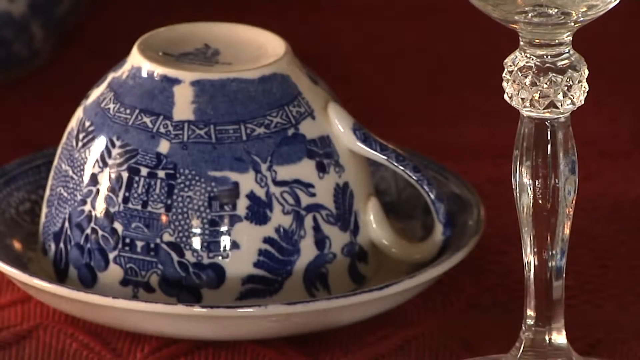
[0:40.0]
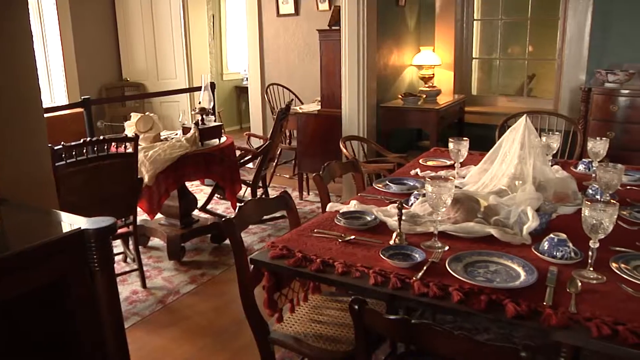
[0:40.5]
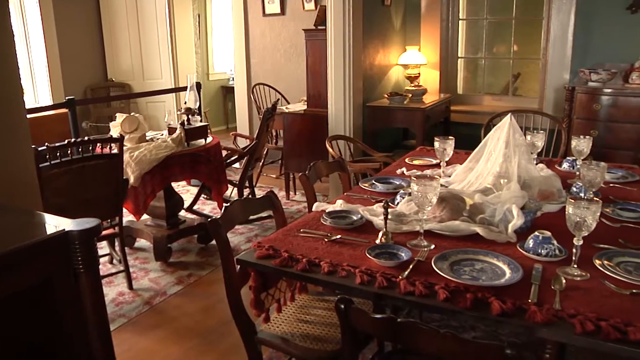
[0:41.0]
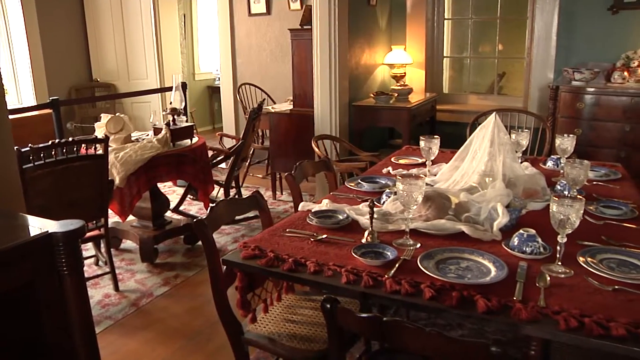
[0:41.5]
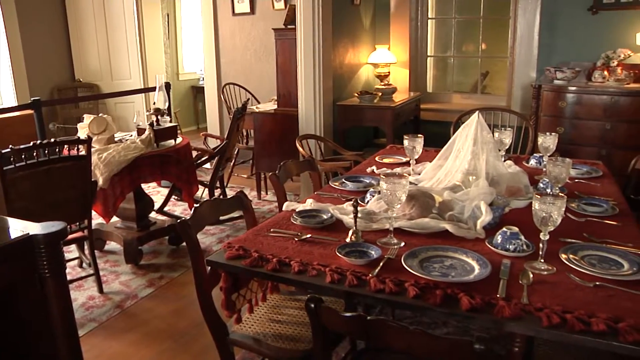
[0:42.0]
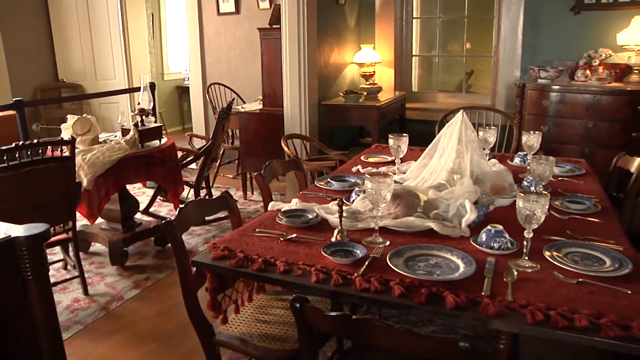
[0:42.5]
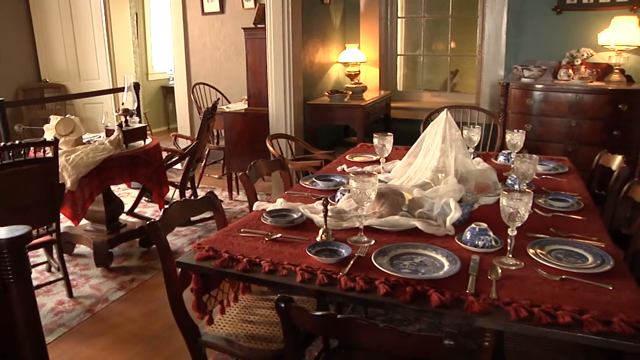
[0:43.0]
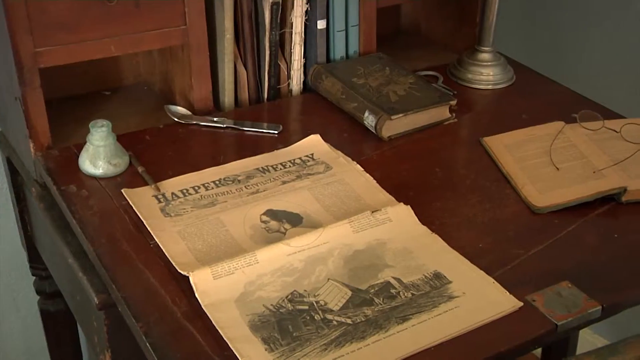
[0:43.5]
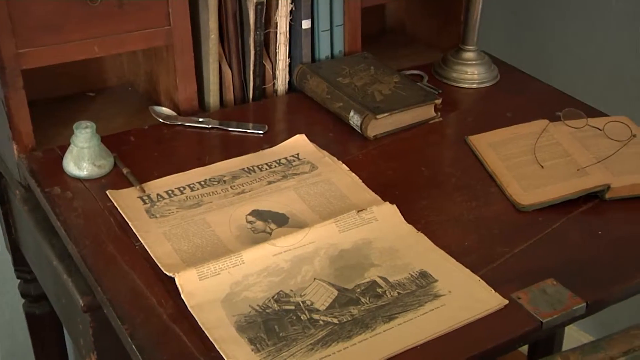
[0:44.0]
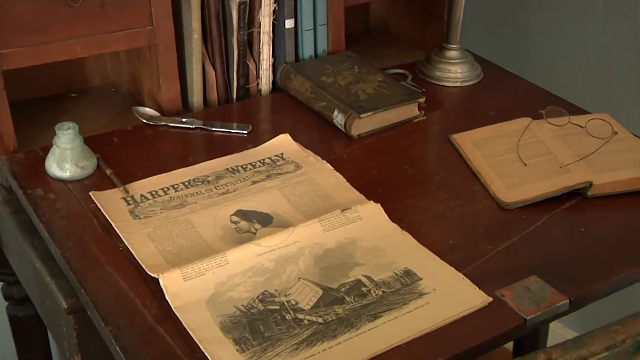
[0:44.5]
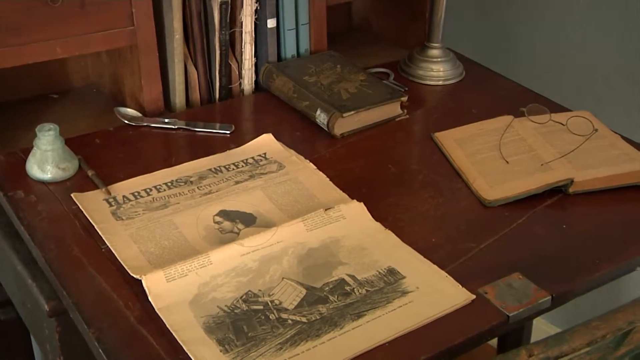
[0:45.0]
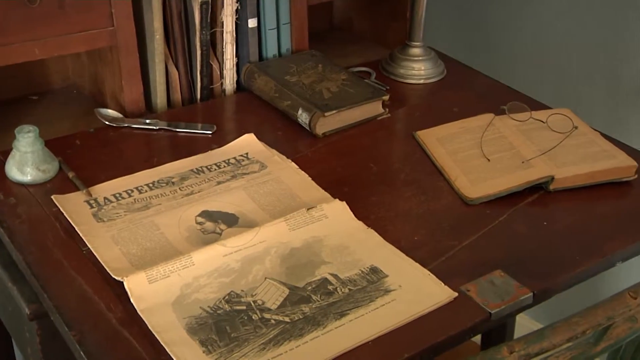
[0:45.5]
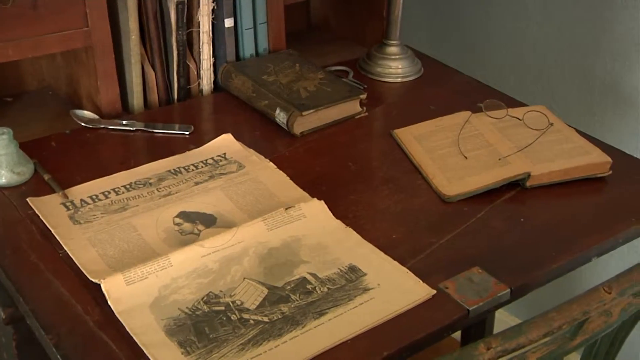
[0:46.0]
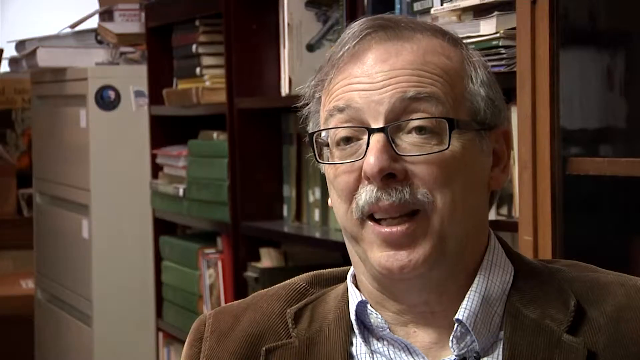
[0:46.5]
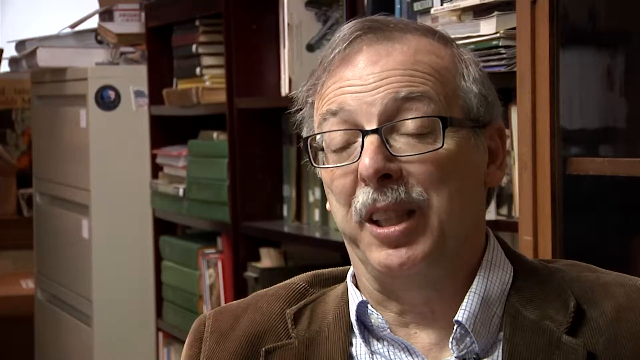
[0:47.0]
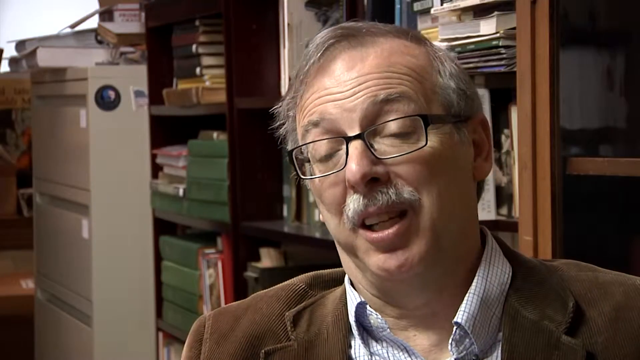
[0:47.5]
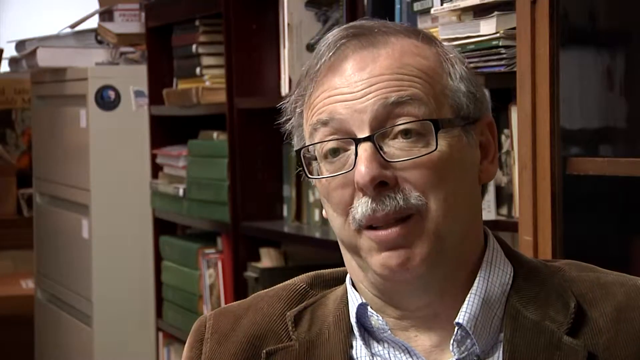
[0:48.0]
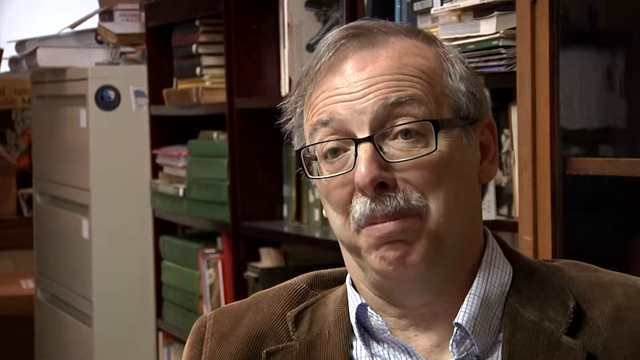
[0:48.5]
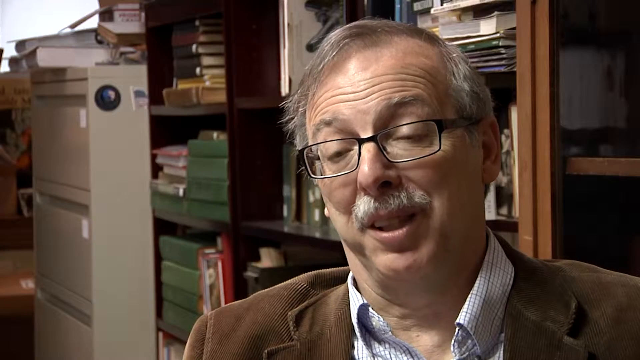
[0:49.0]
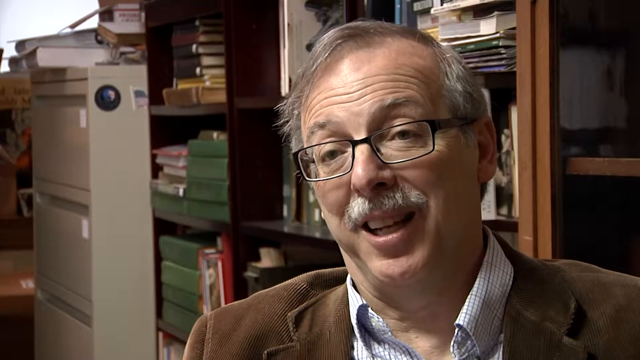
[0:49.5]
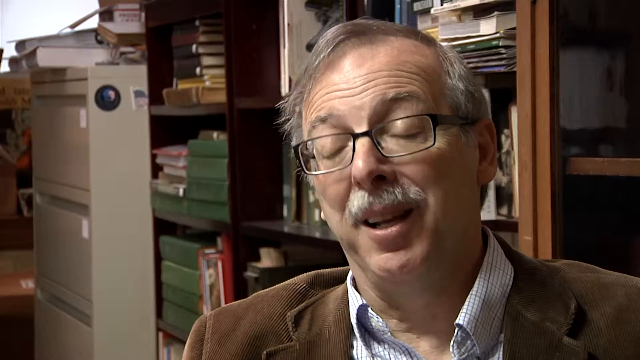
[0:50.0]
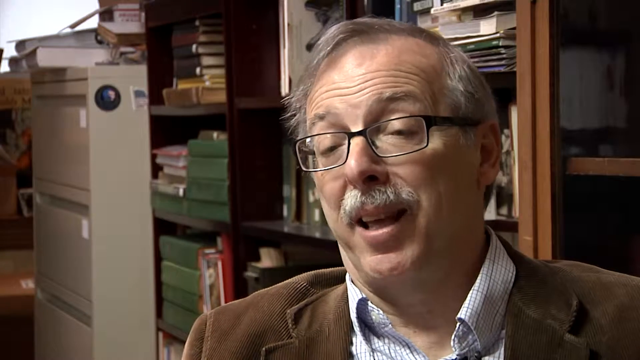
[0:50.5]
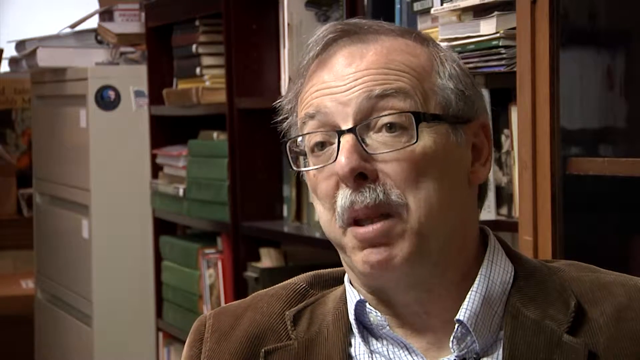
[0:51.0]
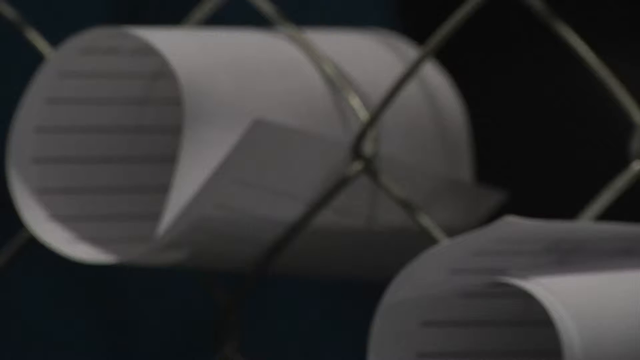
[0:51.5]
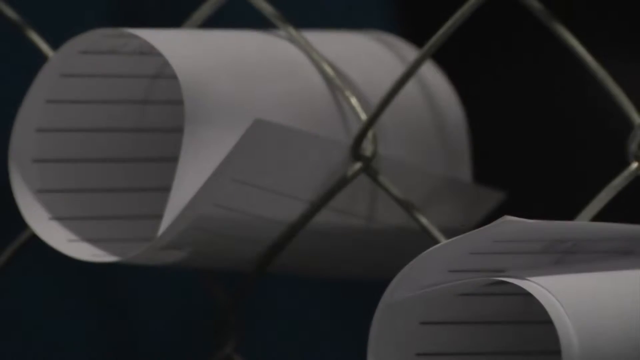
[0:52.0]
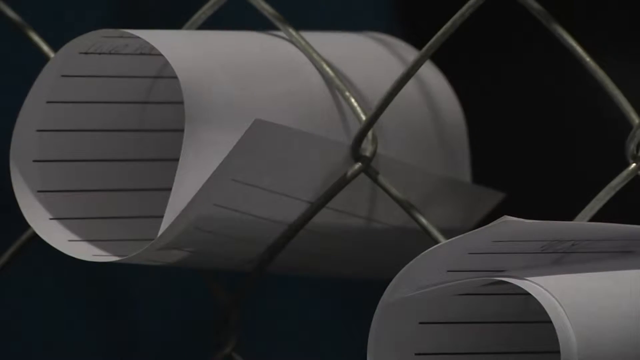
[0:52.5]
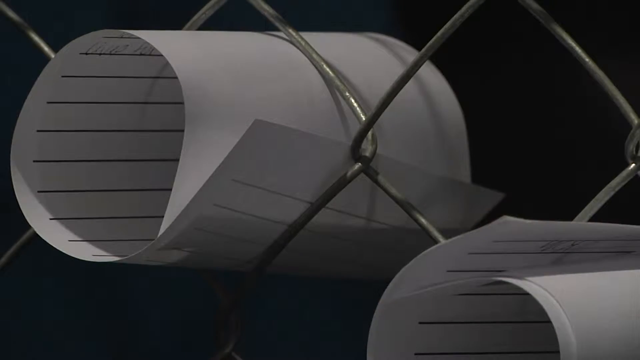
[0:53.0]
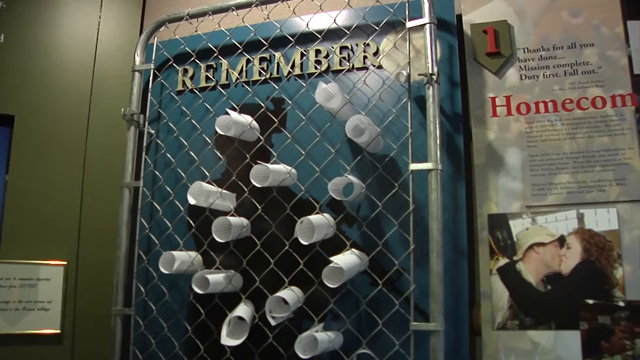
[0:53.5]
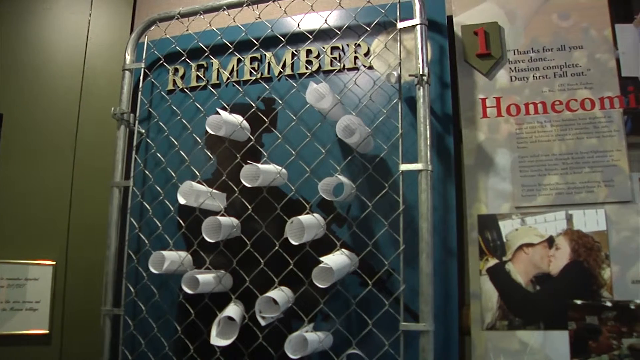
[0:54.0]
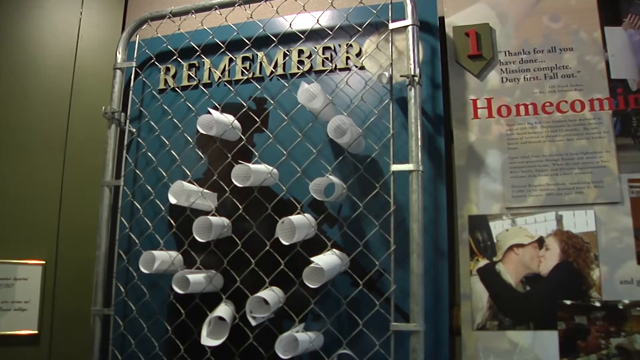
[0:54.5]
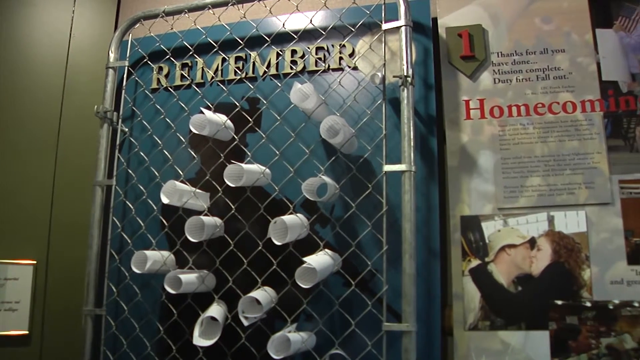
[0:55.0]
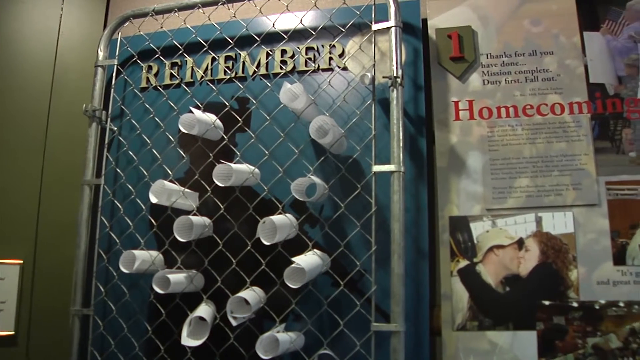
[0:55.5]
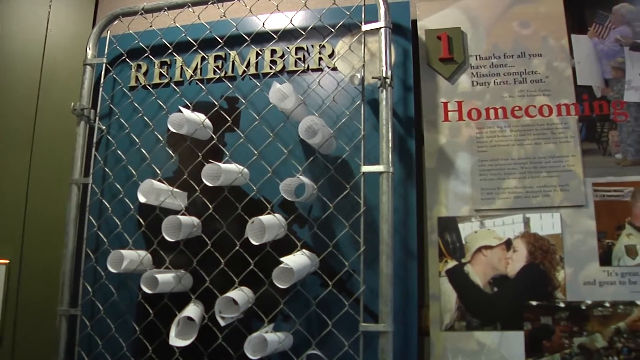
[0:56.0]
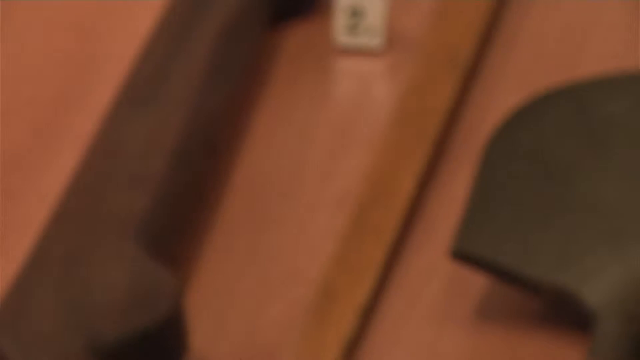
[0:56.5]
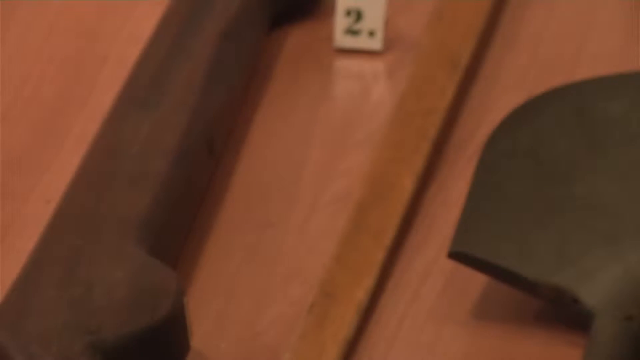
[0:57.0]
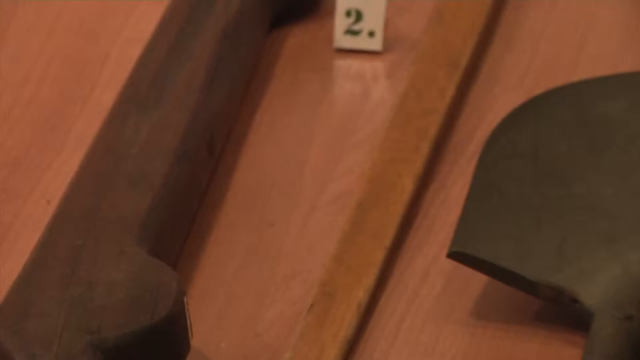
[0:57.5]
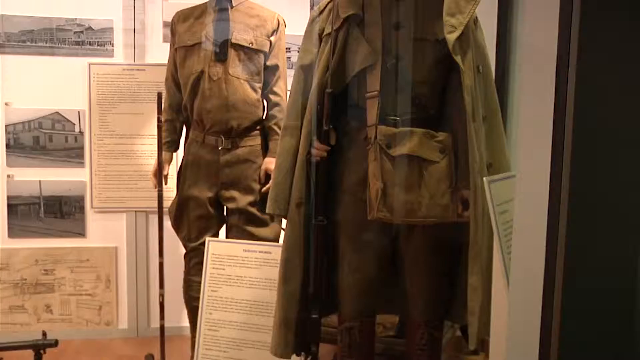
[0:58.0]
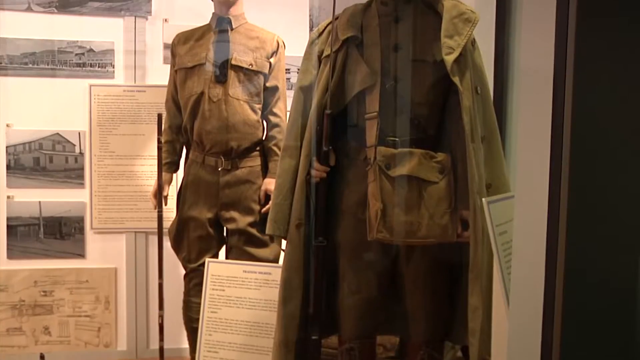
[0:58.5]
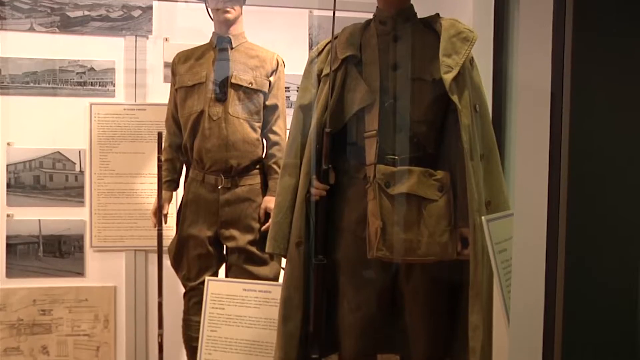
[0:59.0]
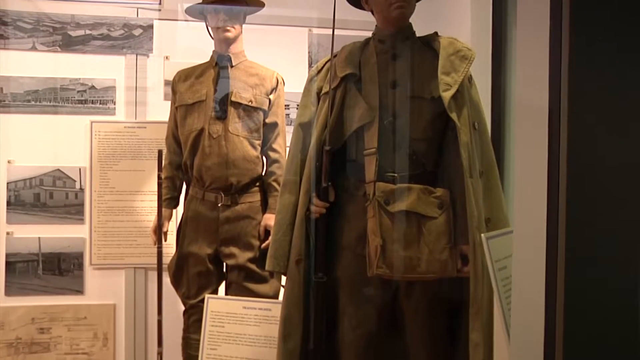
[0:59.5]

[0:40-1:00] An upside-down teacup is shown; it looks like Delft china made to look oriental, with a pagoda on it, and there is a stamp on the bottom. A wine goblet is to the right of it. The whole of what seems to be a pretend house, probably Custer's house, is shown, with old newspapers, books and old spectacles. Inside the museum, there is a little chain-link fence gate with the word "Remember" behind it, and rolled-up pieces of paper are in the holes of the gate. To the right it says "Homecoming," with a picture of a soldier in a floppy military hat kissing his wife.